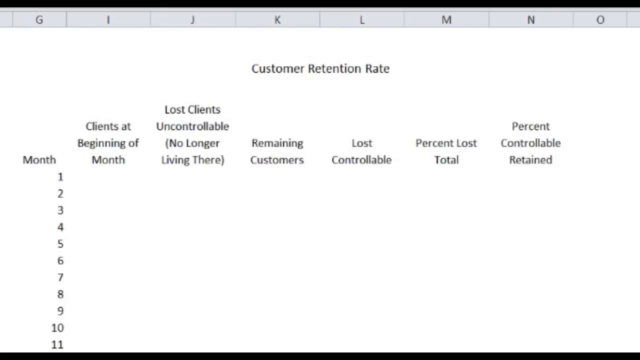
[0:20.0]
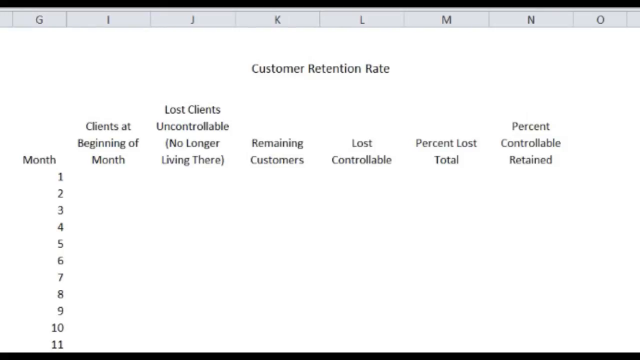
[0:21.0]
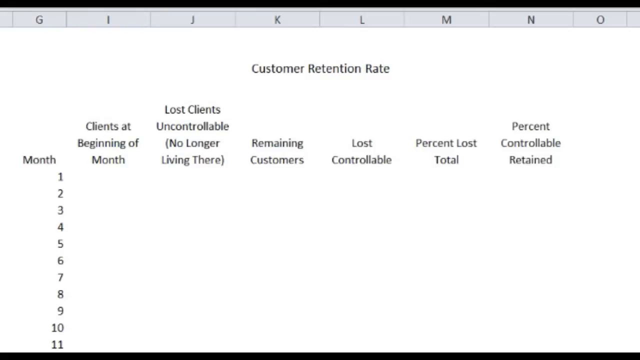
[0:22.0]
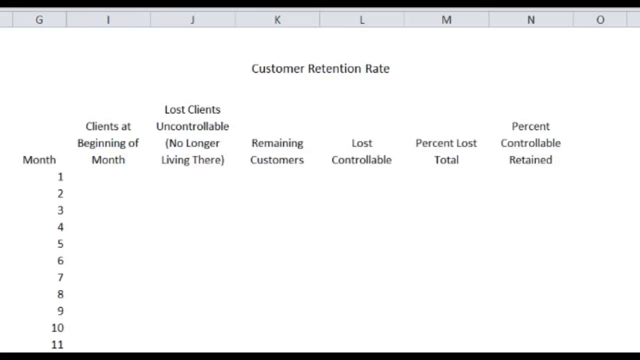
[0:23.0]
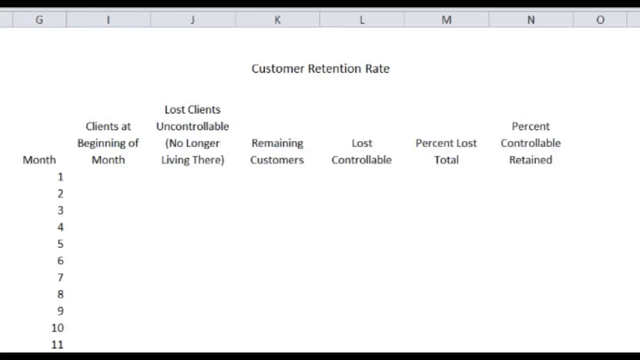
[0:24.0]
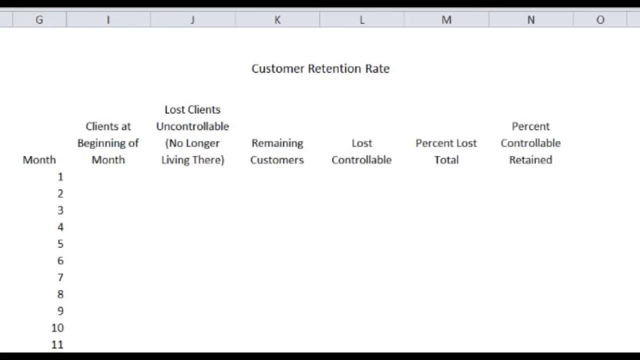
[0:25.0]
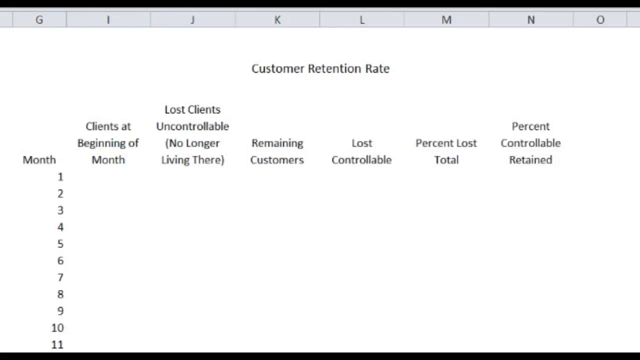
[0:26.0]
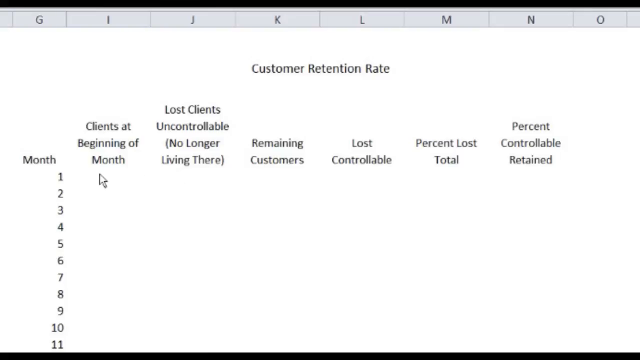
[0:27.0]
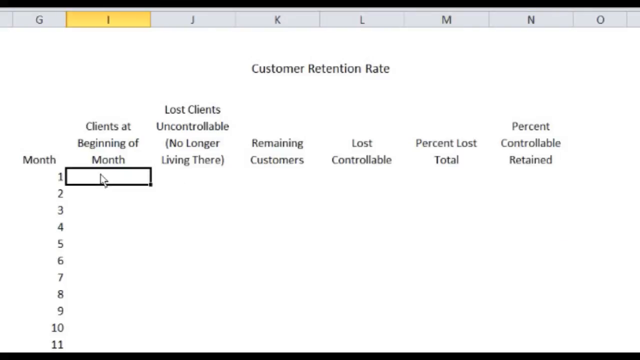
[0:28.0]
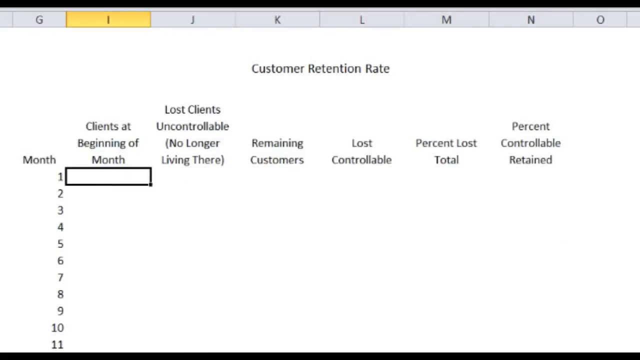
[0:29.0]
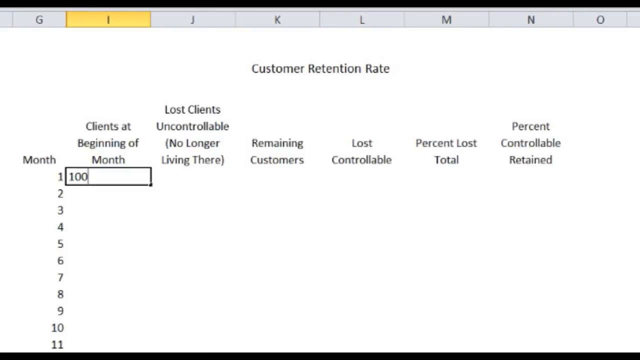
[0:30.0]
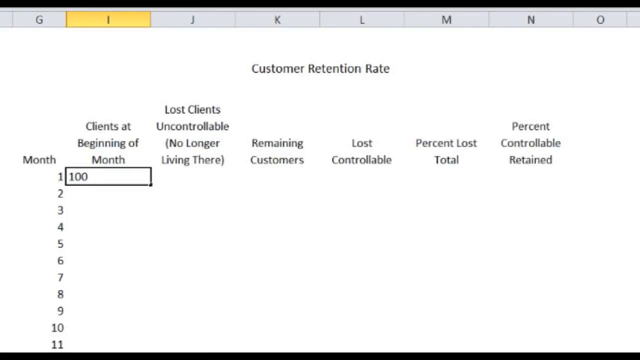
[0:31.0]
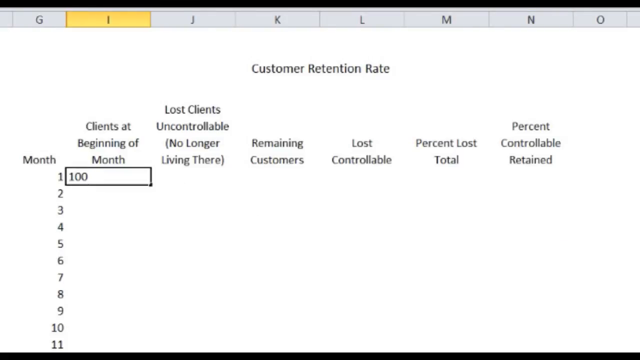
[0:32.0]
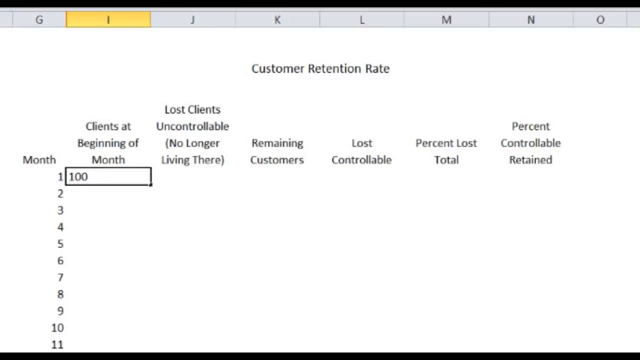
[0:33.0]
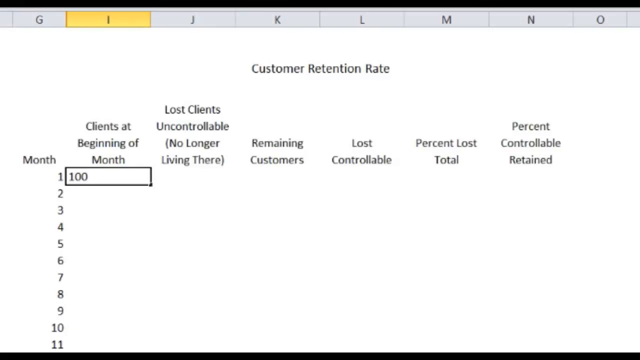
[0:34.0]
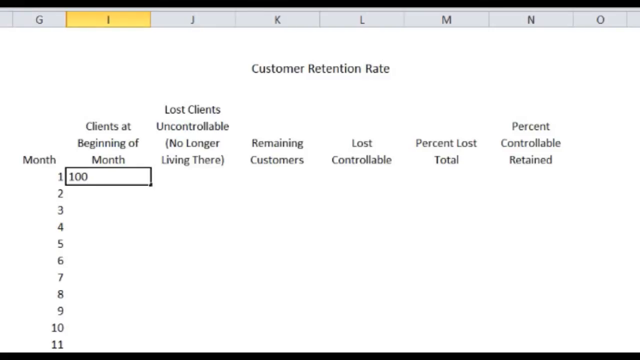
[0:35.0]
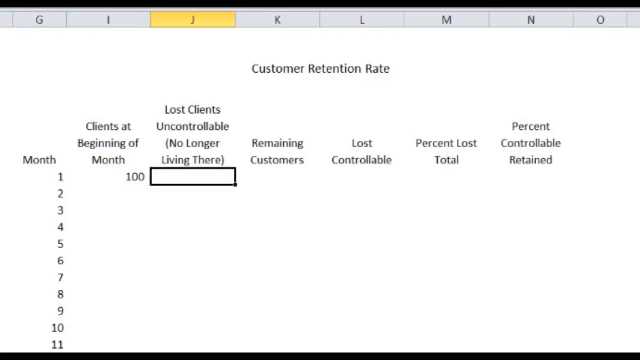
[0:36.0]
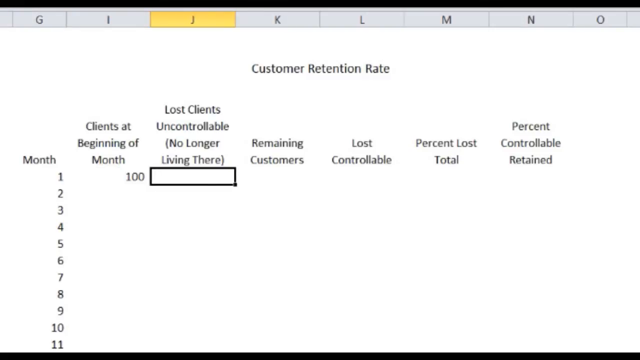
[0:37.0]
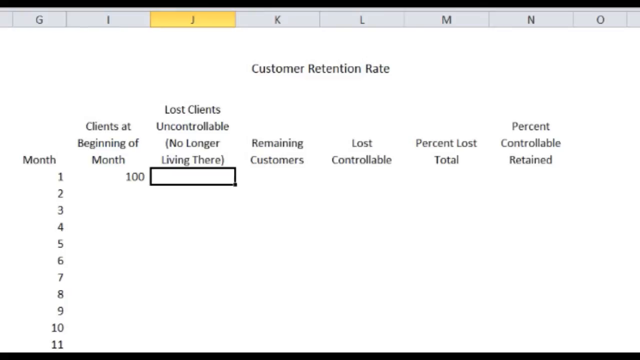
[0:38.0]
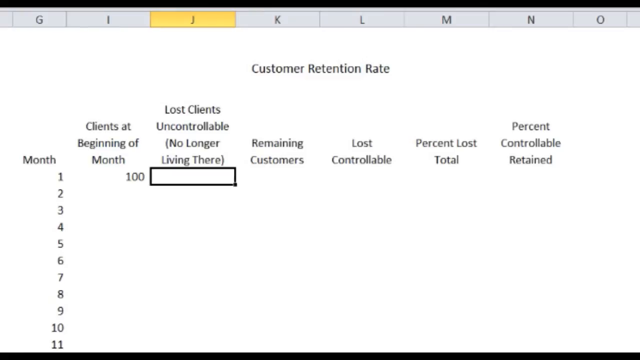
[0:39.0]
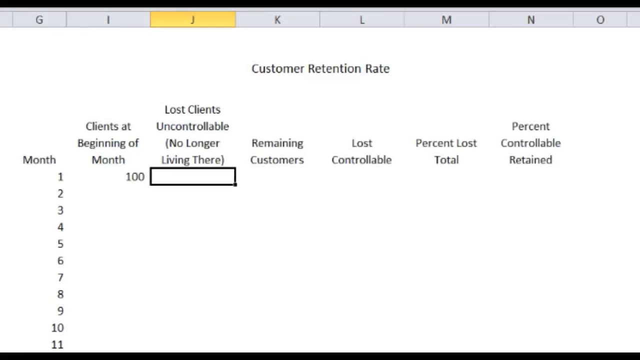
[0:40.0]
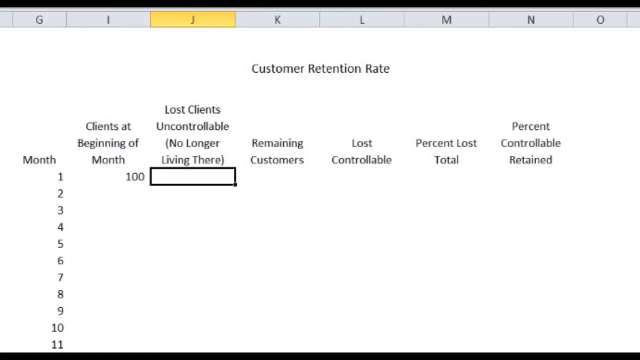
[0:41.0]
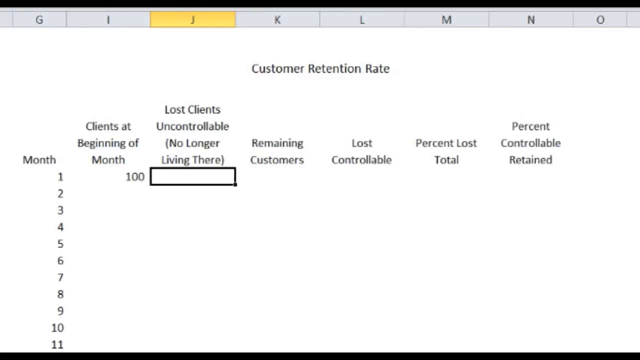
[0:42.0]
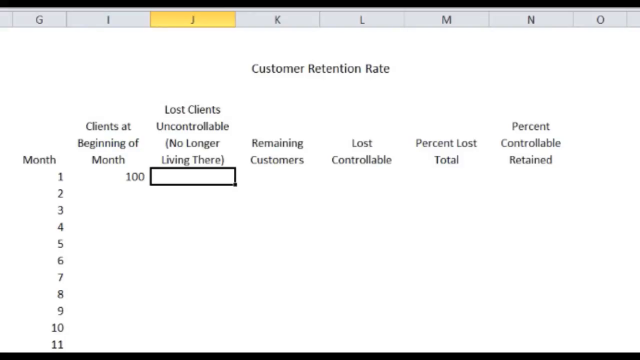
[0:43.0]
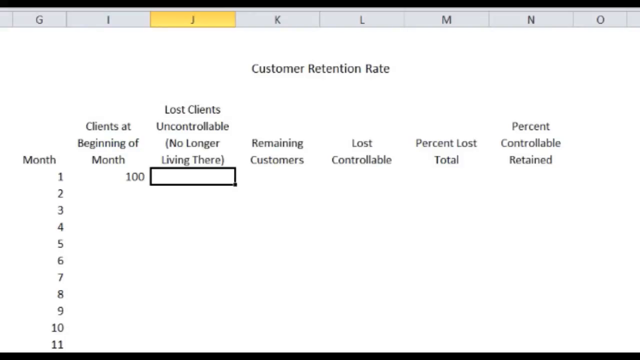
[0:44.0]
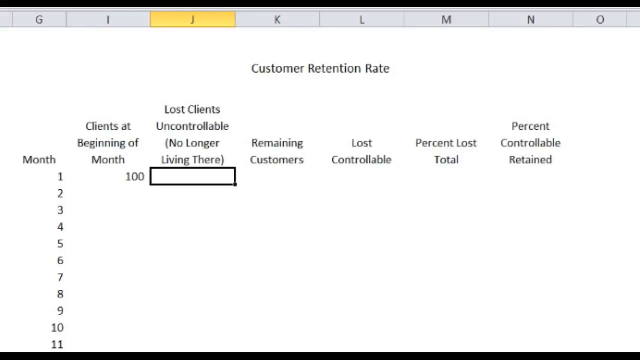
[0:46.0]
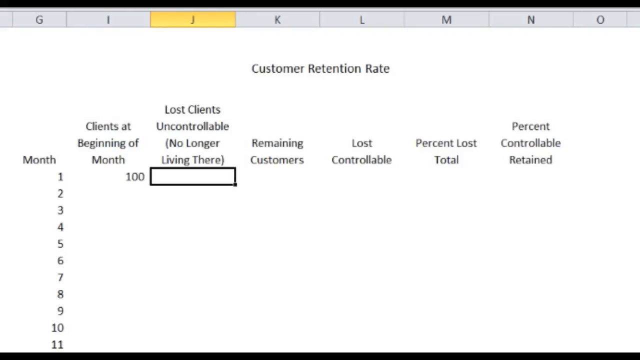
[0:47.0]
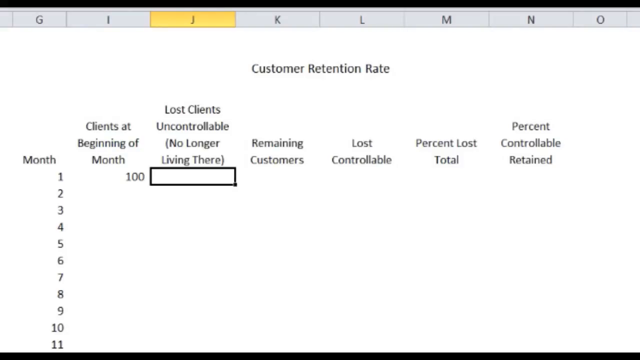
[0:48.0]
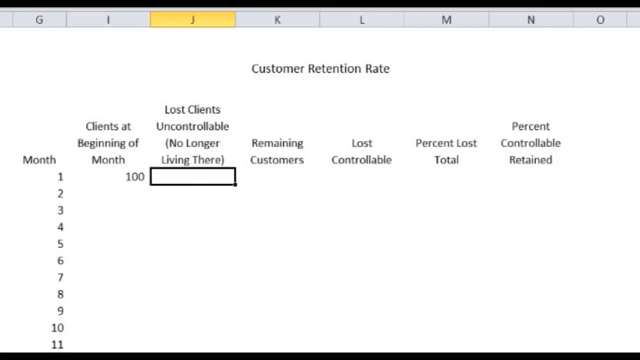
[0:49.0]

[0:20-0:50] The same Excel spreadsheet is on screen, and the number 100 is filled in next to month one. The spreadsheet has "Customer retention rate" as a heading, "Month" as the title of the first column with the months in ascending order, and then the columns "Clients at the beginning of the month", "Lost clients uncontrollable, no longer living there", "Remaining customers", "Lost controllable", "Percent lost total", and finally "Percent controllable retained". Everything is in a regular, typical black font, and there are no images on the screen; it looks like a regular Excel spreadsheet.